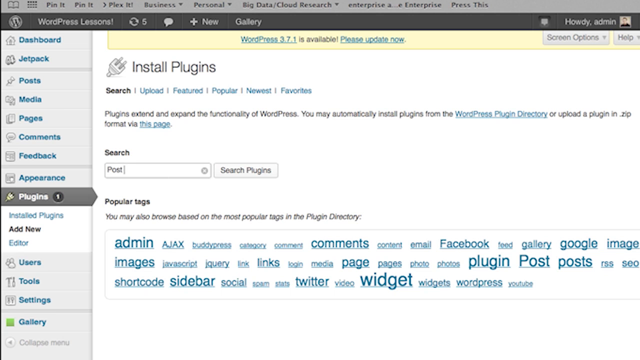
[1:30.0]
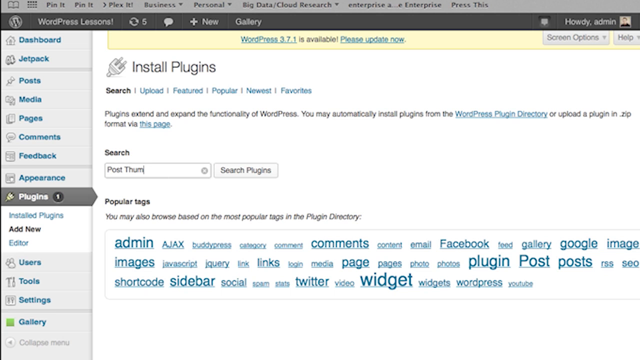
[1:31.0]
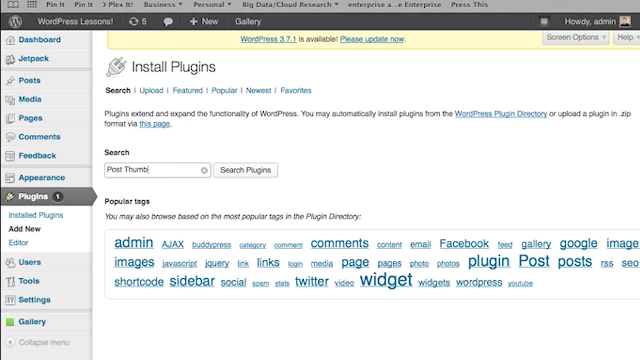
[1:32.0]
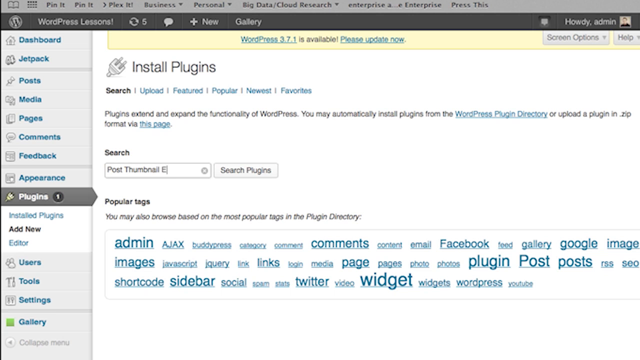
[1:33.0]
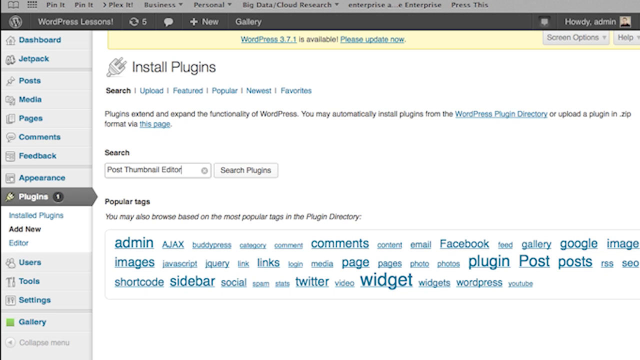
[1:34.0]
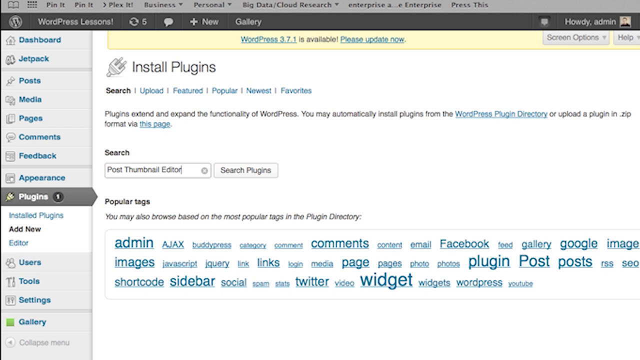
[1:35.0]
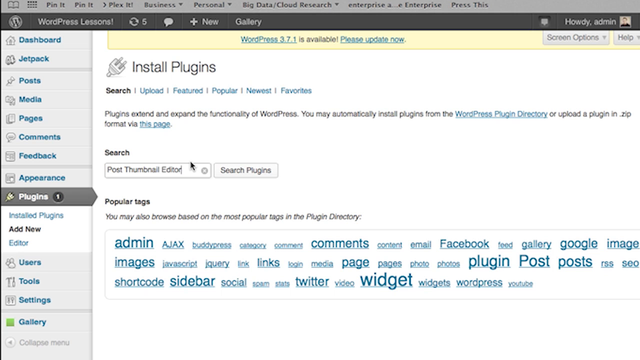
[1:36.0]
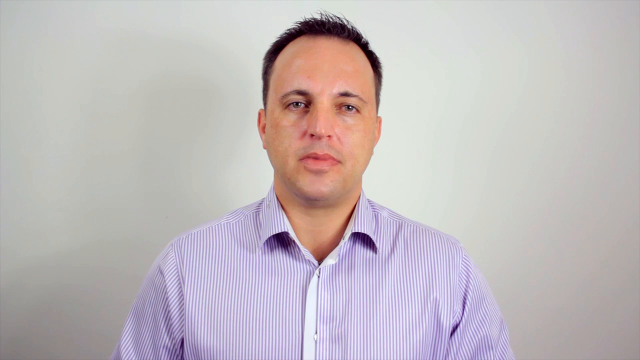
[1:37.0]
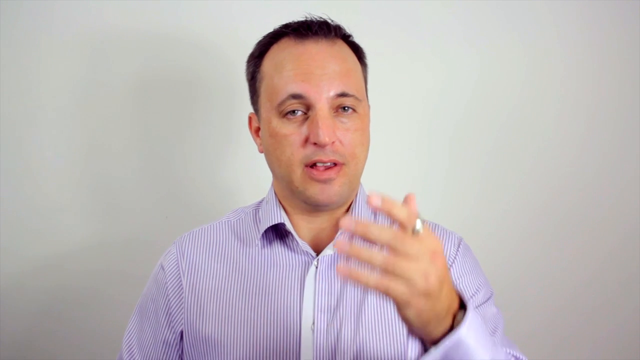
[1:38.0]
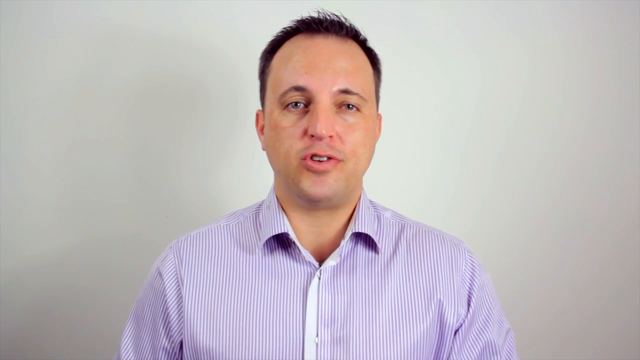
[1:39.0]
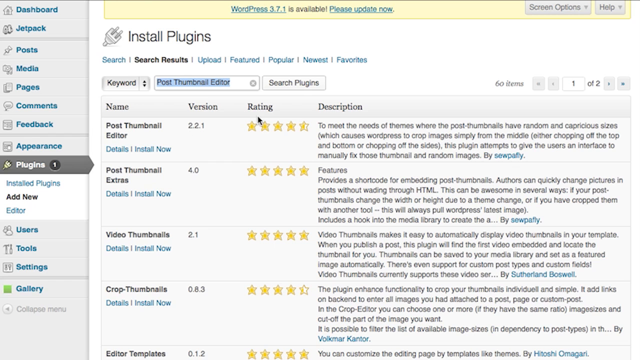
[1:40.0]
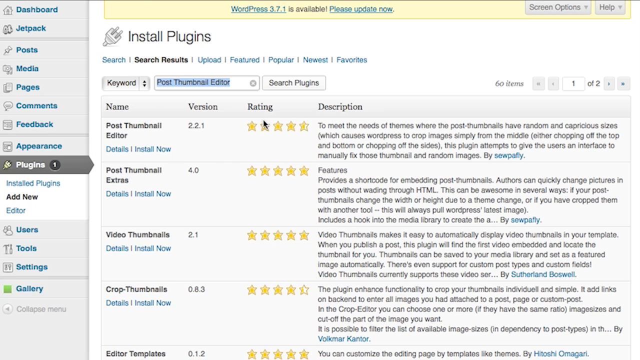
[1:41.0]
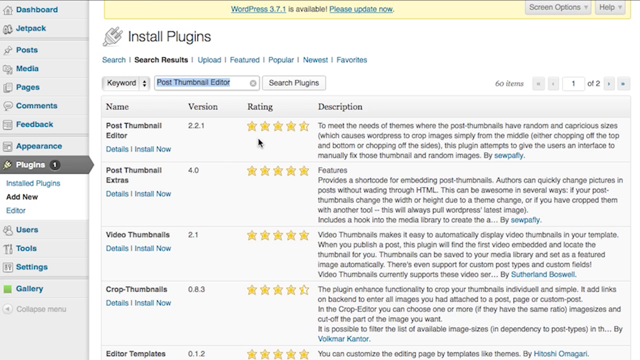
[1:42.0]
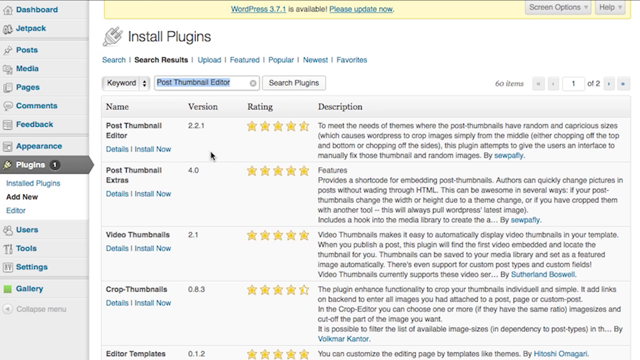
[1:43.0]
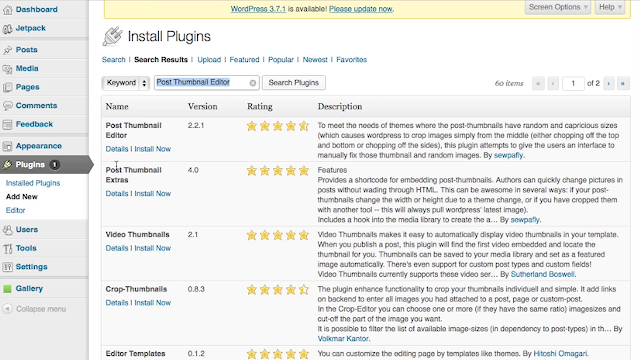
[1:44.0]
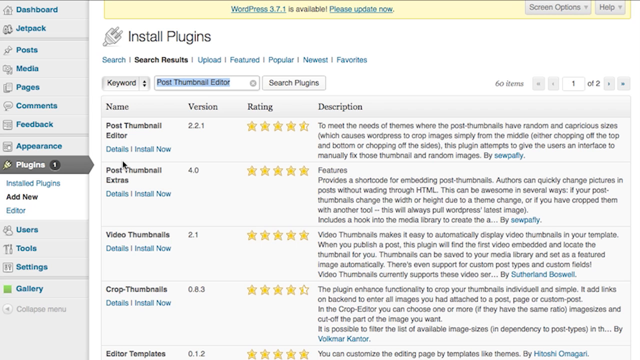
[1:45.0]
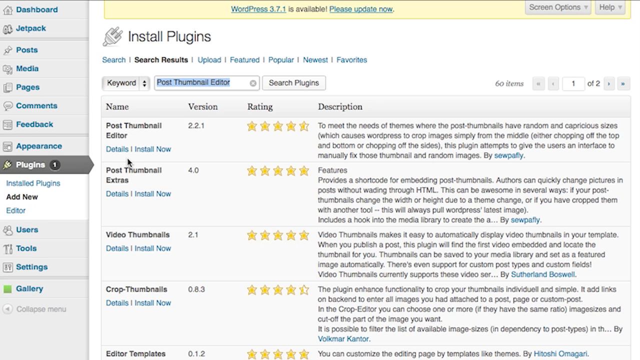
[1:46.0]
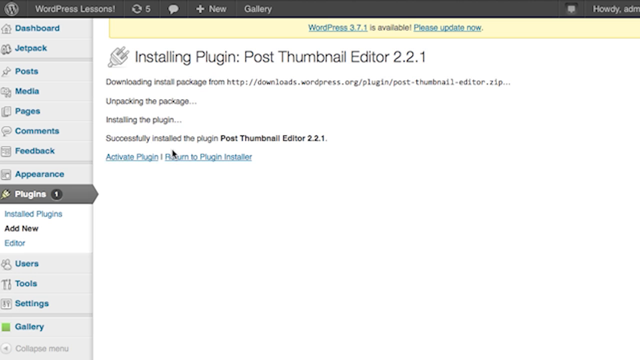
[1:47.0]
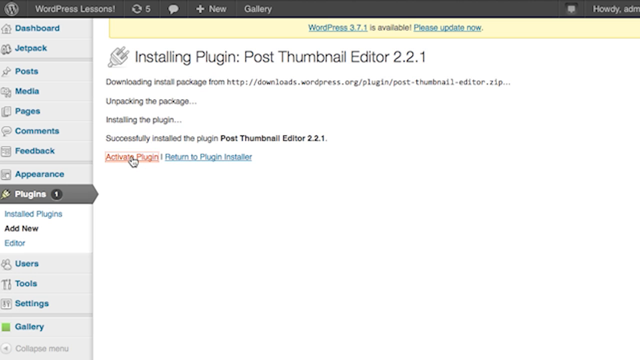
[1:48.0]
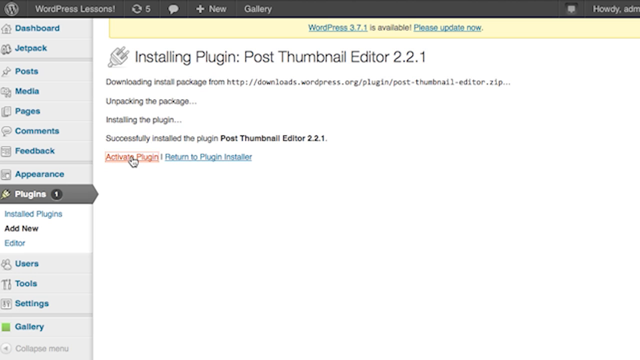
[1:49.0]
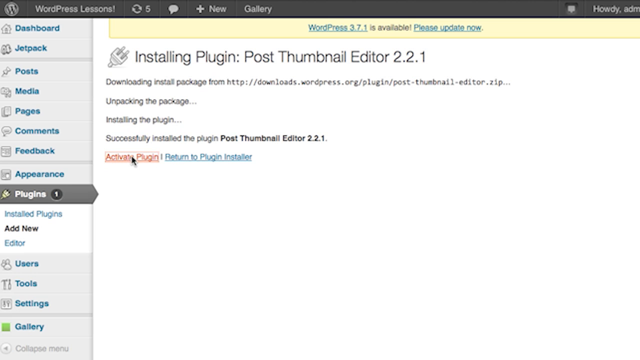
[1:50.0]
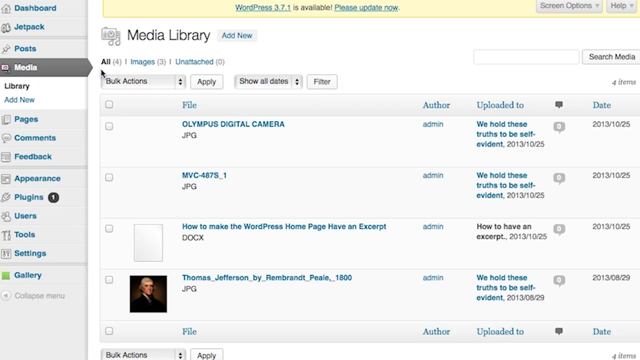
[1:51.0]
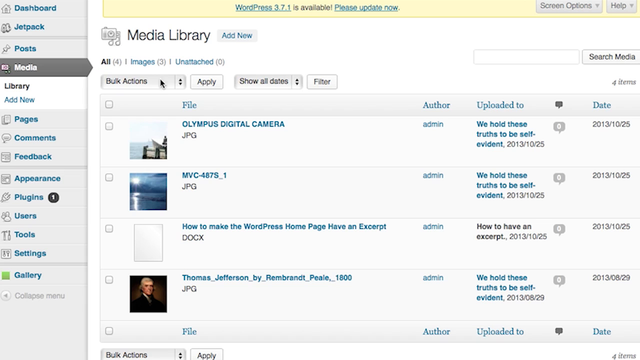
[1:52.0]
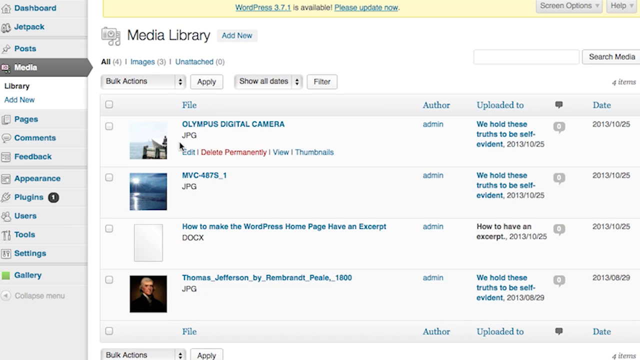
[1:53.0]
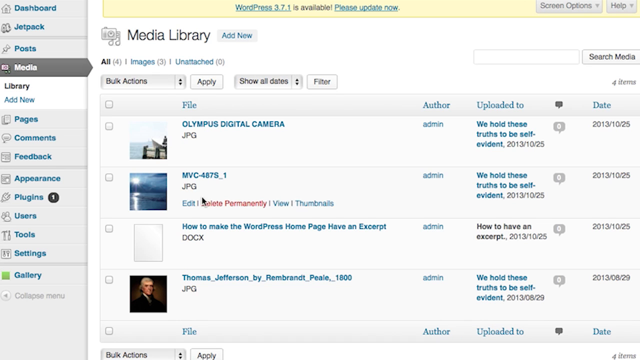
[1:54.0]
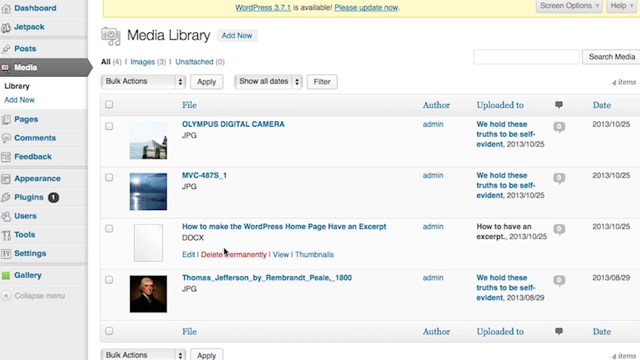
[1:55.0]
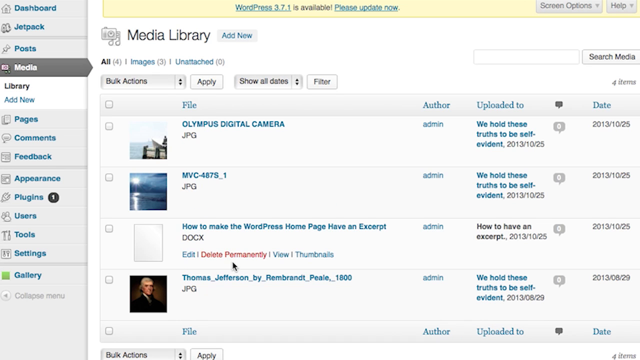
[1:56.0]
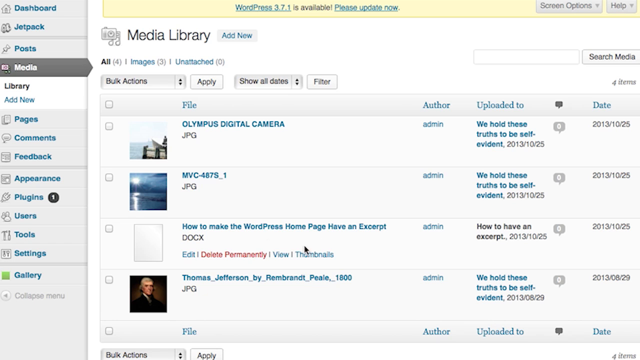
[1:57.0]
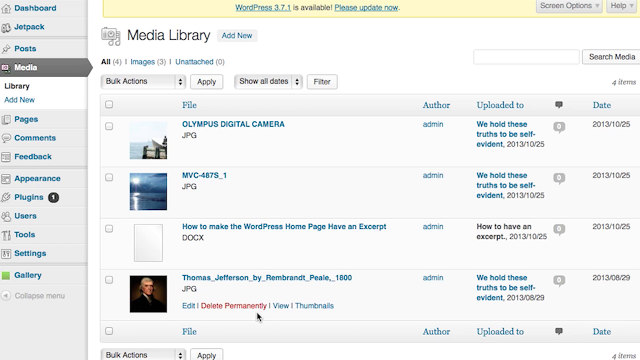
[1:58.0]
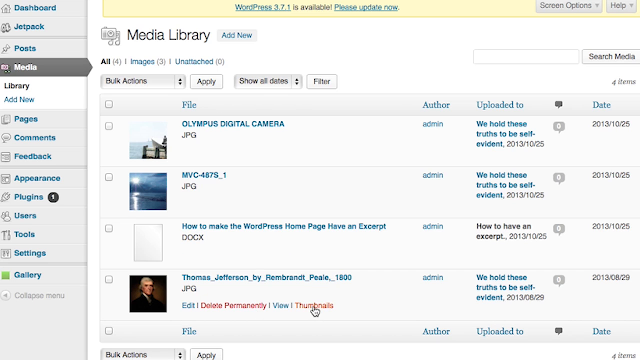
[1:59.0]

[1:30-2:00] The user types "post thumbnail editor" into the search box on the install plugins page of the WordPress dashboard. A shot follows of him looking toward the camera, his left hand coming into view as if to gesture. The next screen shows the search results under "install plugins" with the search text "post thumbnail editor": a table listing four plugins with name, version, rating and description columns. Ratings are shown as yellow stars and versions as numbers such as 2.21. One plugin is named "post thumbnail editor", with "details" and "install now" beneath it; the mouse hovers over and clicks install now. A new page reads "installing plugin post thumbnail editor 2.21", with a few lines about downloading the package and installing the plugin, and the mouse hovers over a button at the bottom of the screen that says "activate plugin". Next is a "media library" page with a table of images and files uploaded to WordPress, thumbnails in the left-hand column. He hovers over the images in the files column, the second column, where there appears to be a new "thumbnails" button.